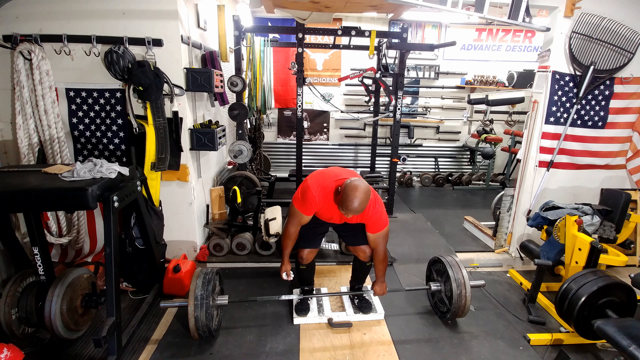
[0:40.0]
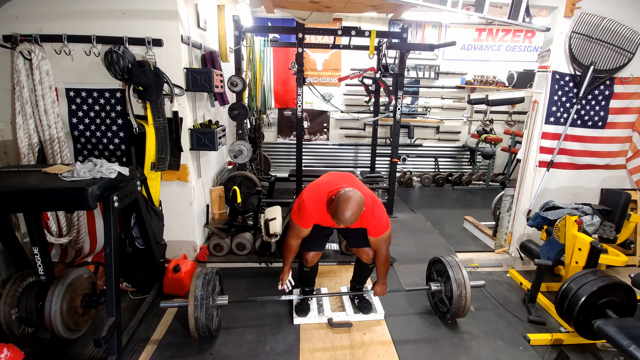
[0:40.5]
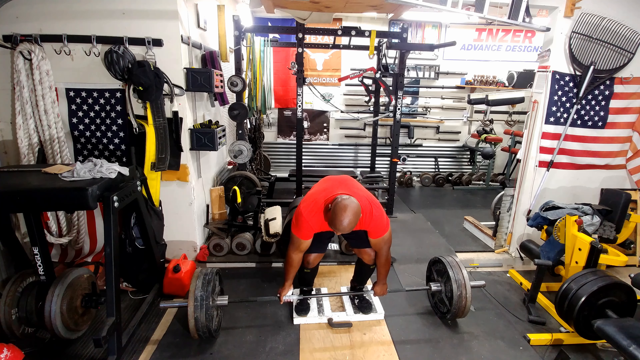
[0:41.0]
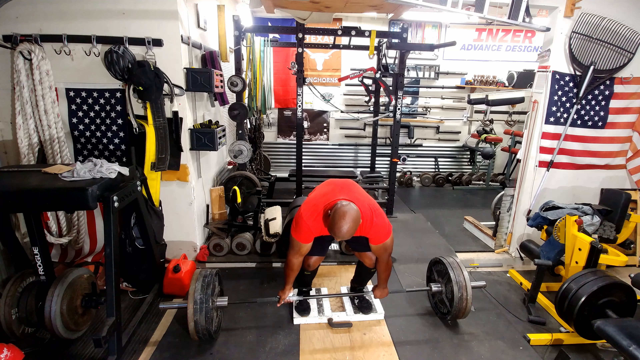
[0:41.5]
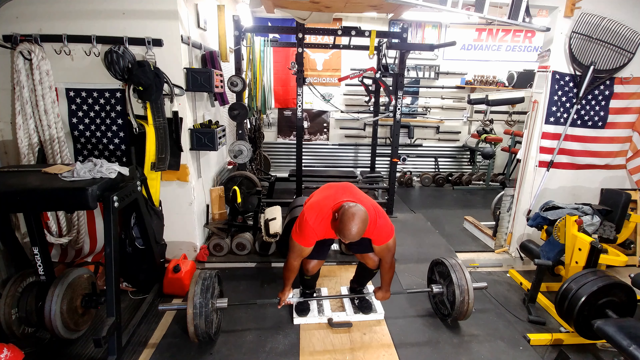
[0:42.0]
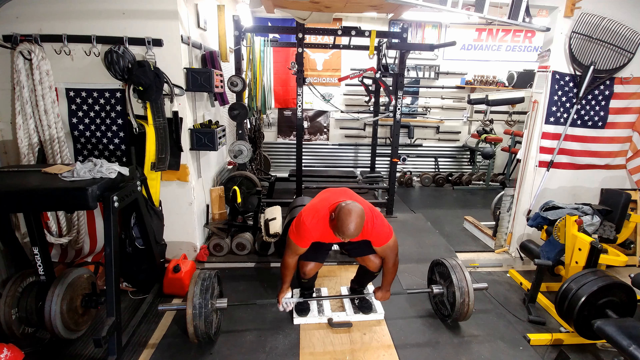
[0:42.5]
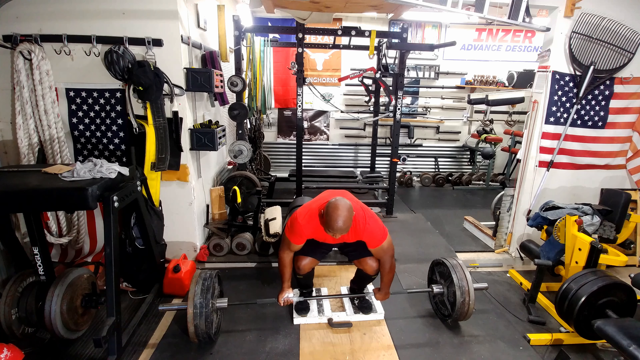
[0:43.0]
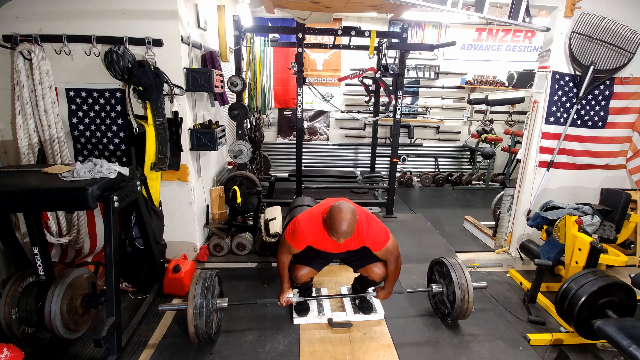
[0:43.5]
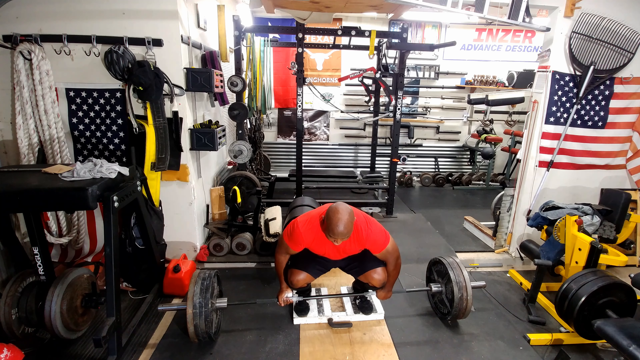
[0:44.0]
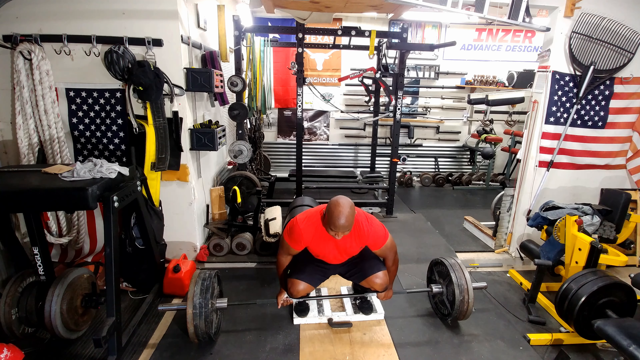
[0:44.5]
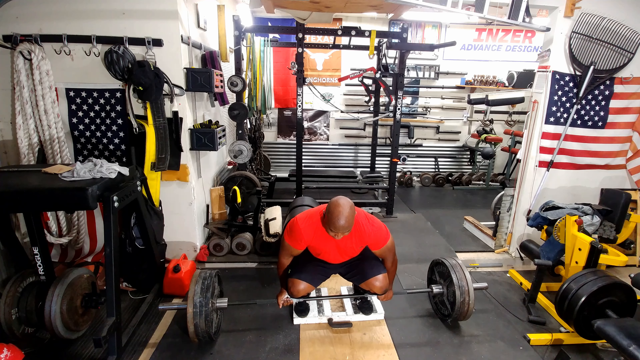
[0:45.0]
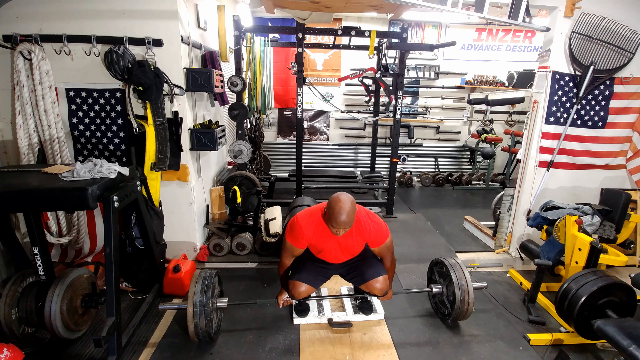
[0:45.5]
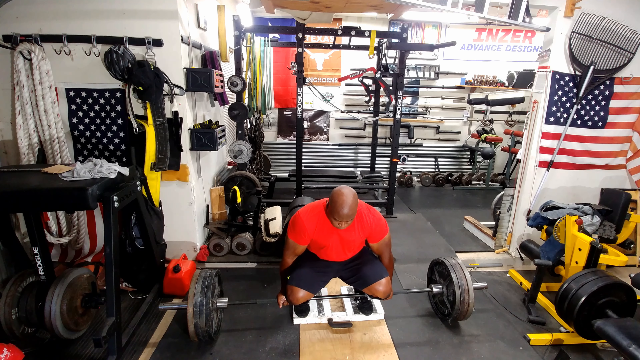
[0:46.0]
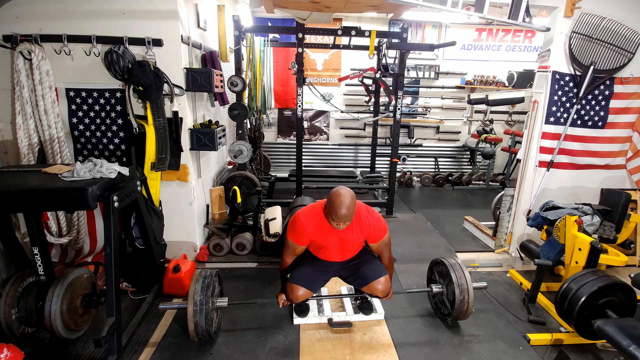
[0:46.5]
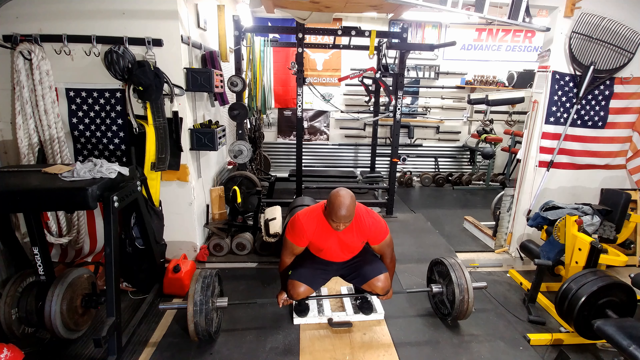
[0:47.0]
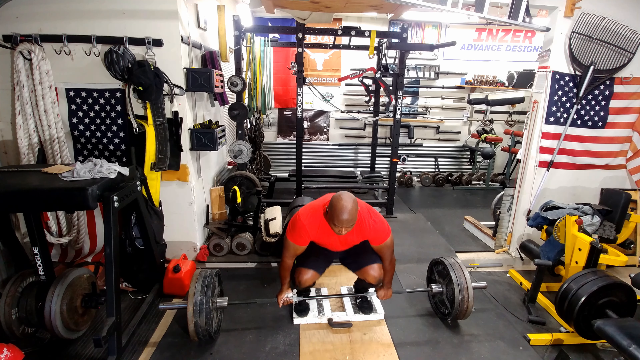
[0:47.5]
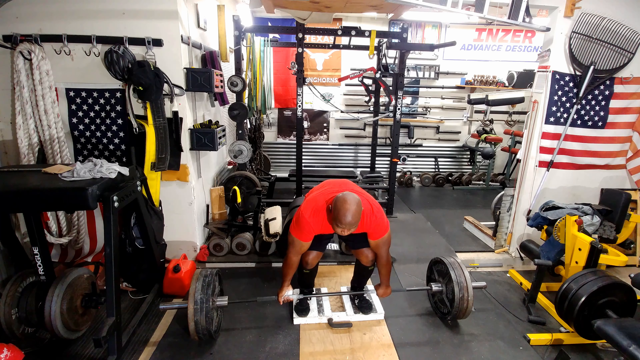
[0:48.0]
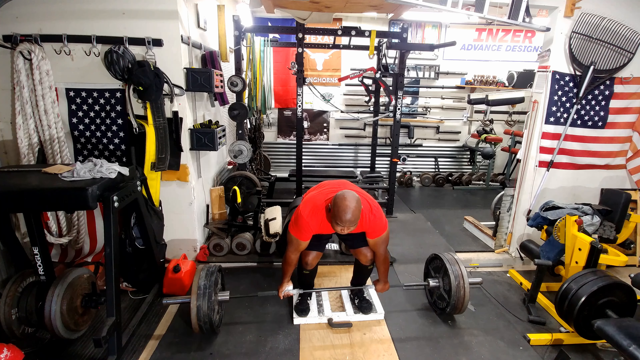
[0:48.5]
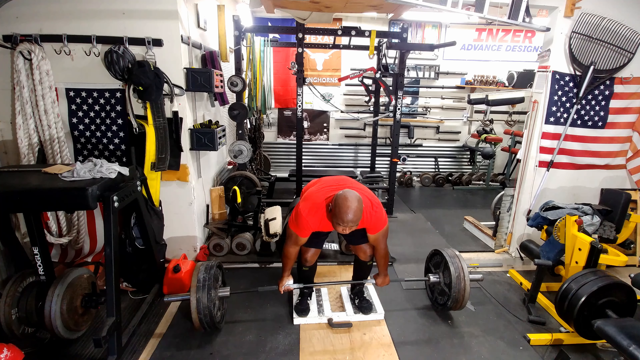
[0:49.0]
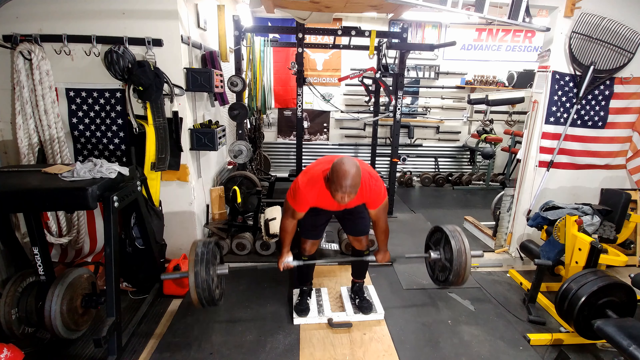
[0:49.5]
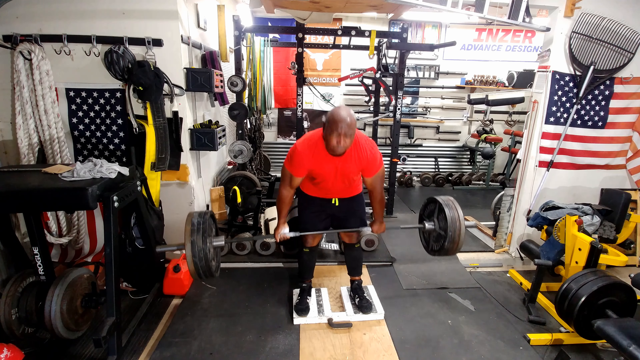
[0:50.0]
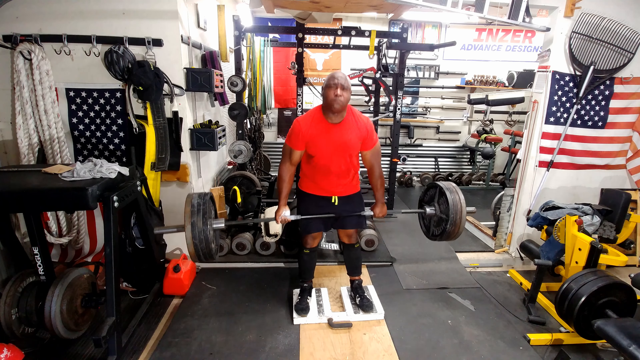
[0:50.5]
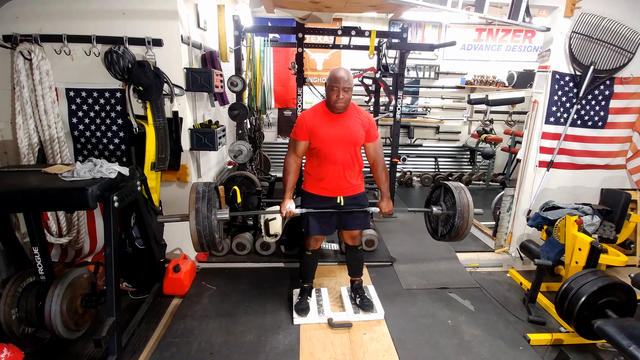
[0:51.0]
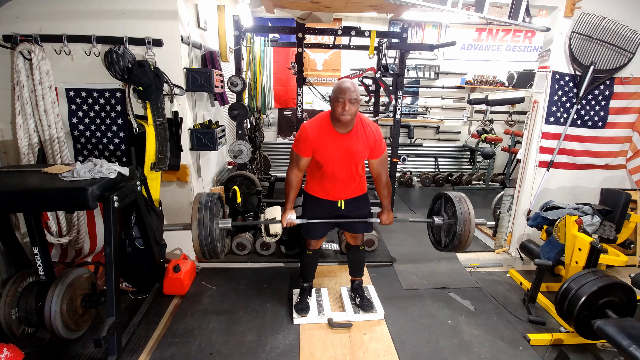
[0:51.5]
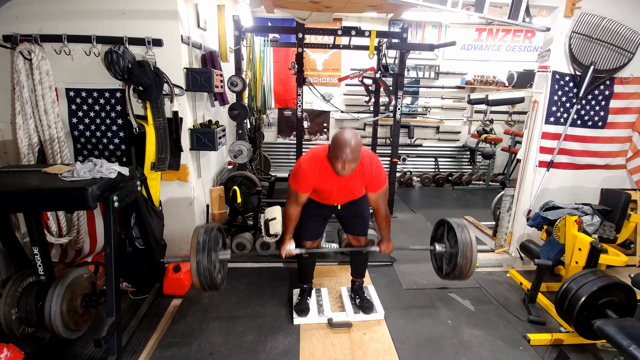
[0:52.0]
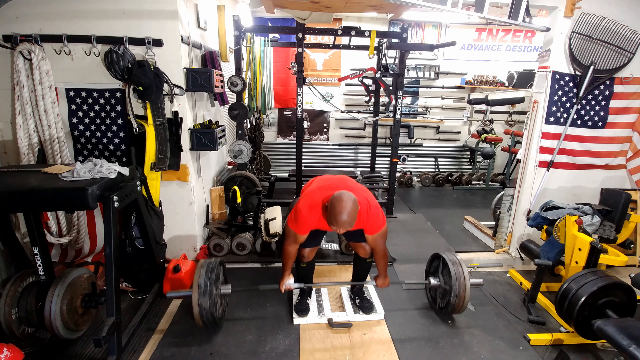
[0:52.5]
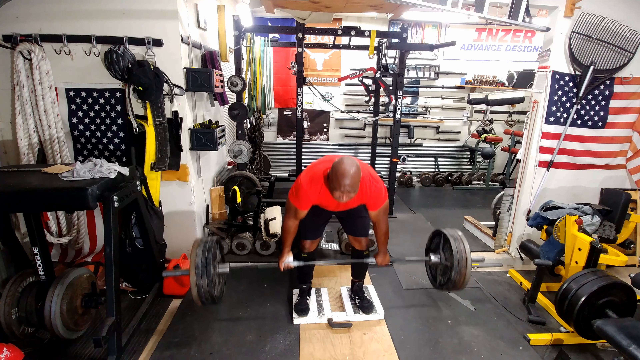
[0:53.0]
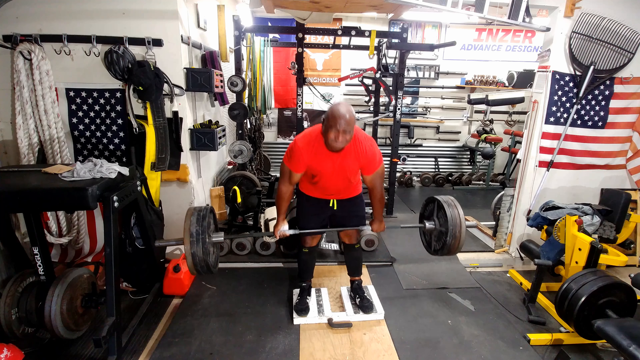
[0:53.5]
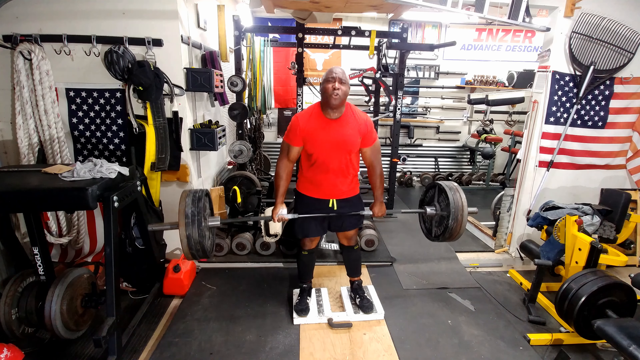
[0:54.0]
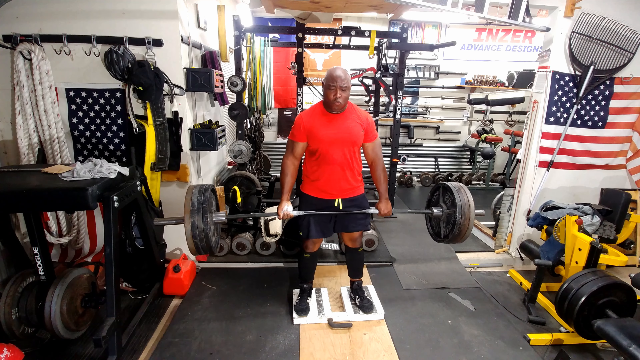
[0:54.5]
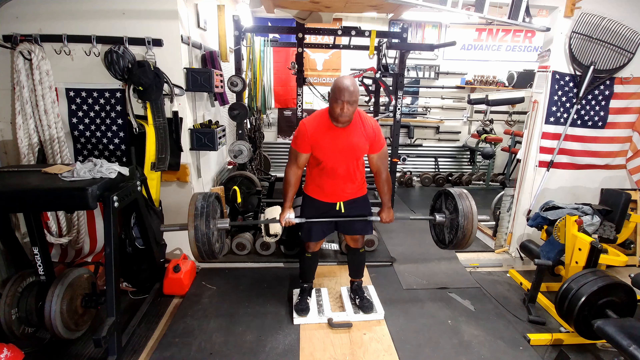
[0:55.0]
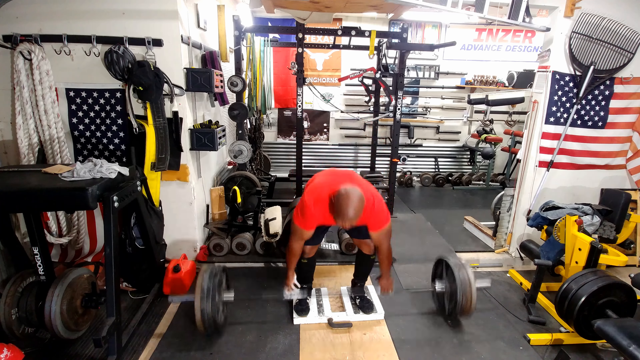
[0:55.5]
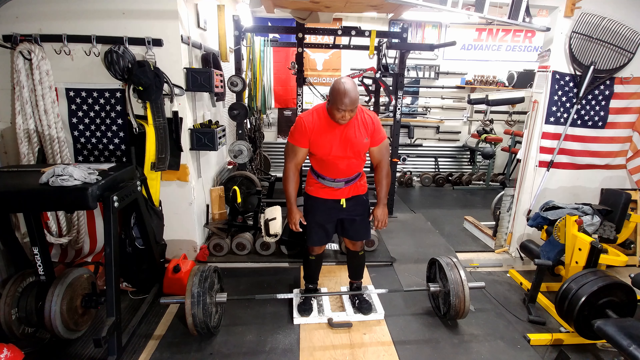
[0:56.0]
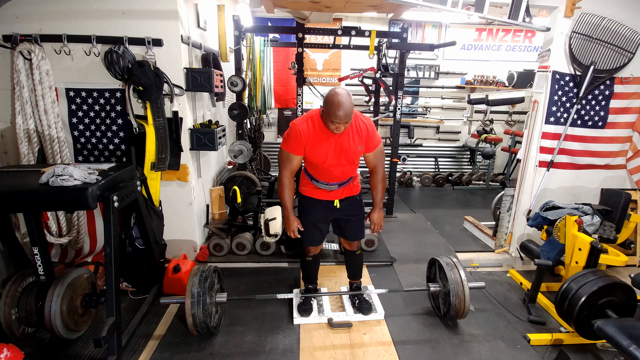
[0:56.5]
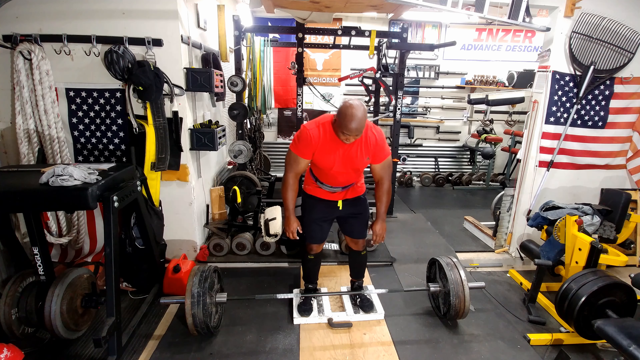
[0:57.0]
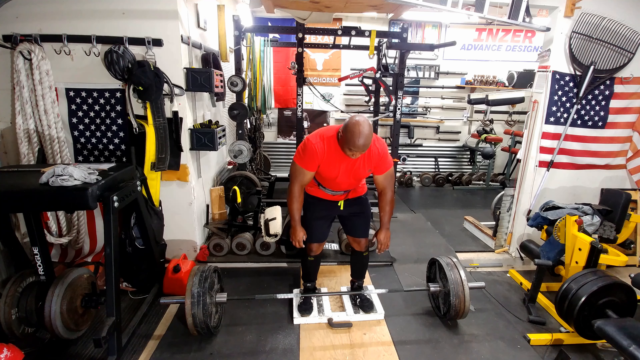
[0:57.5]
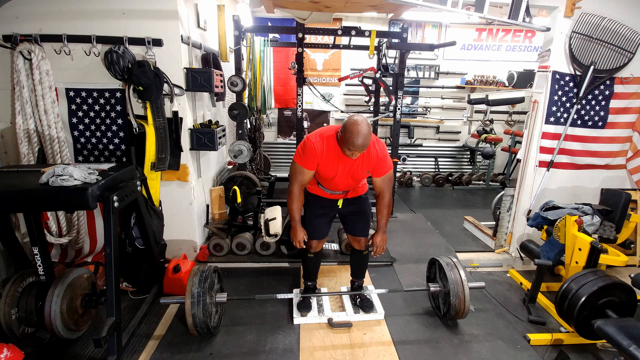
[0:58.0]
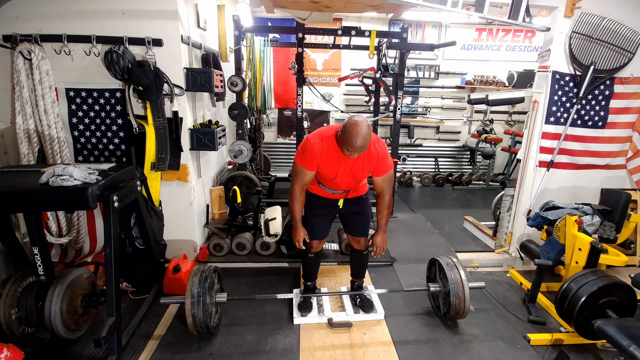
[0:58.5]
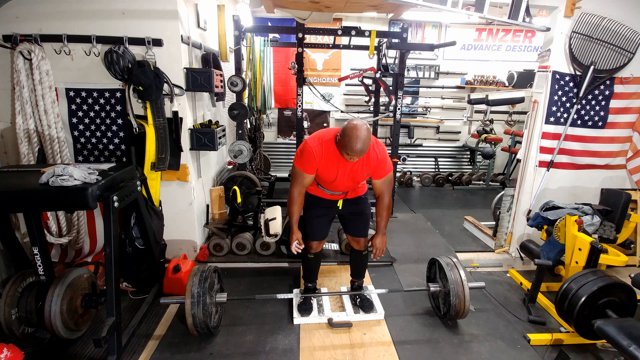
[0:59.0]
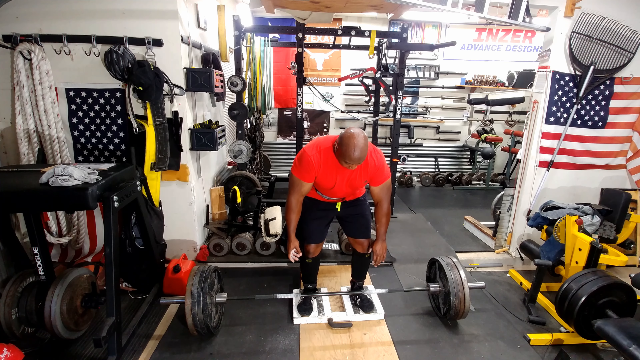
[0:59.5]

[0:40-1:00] The man bends over to pick up the weight, which now appears to have about four plates on each side. One hand is turned outward so that the palm is visible, while the other is turned forward, and he grips tight. He is in a full squat as he tries to pick it up. He struggles, lifts out of the squat and raises the bar, the strain showing on his face and his arms bulging. He does it two times, then the camera cuts to show him doing it again and lifting out of the squat. He struggles with each lift, blowing out each time he rises, and his back bends each time.